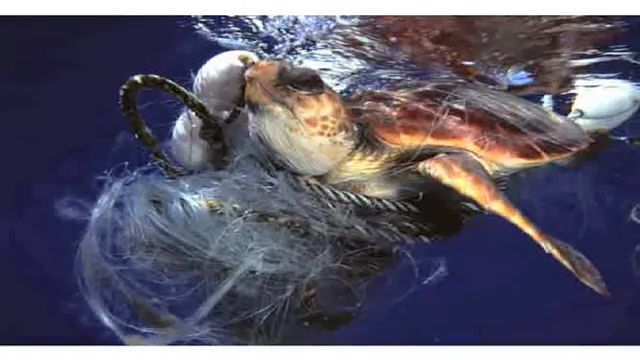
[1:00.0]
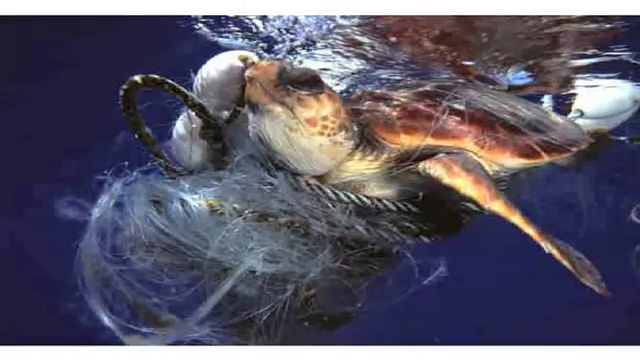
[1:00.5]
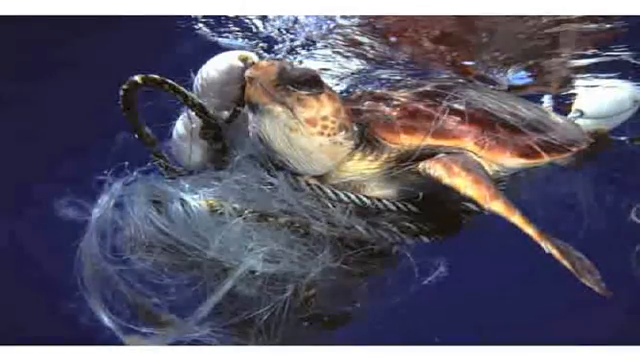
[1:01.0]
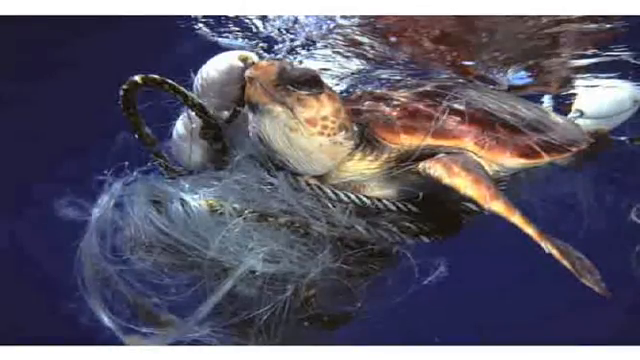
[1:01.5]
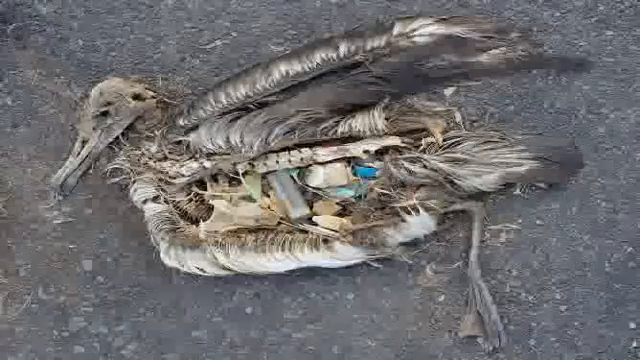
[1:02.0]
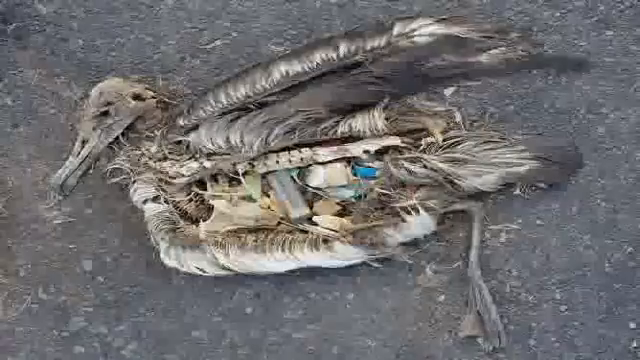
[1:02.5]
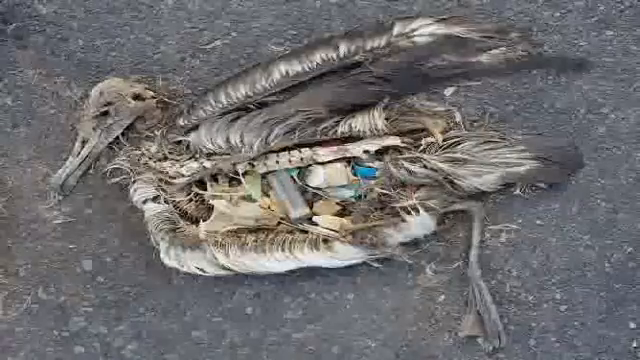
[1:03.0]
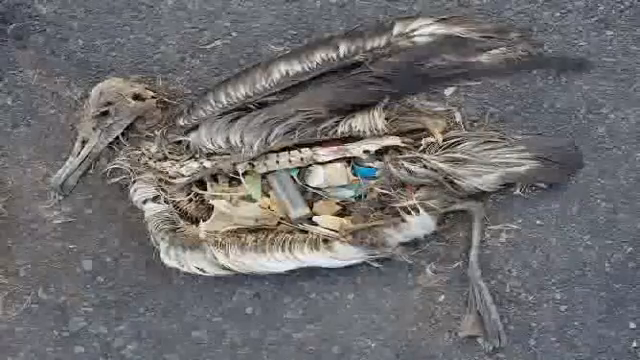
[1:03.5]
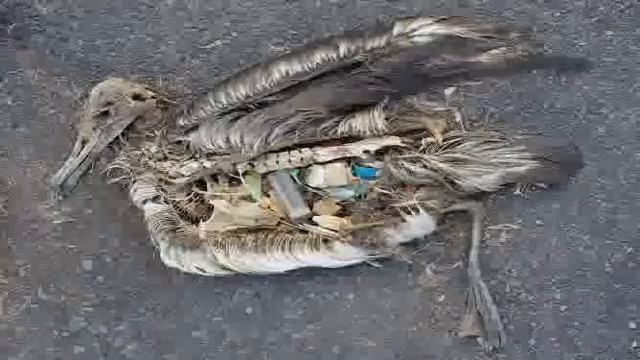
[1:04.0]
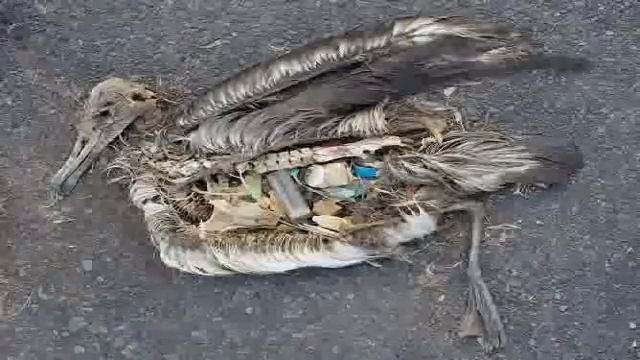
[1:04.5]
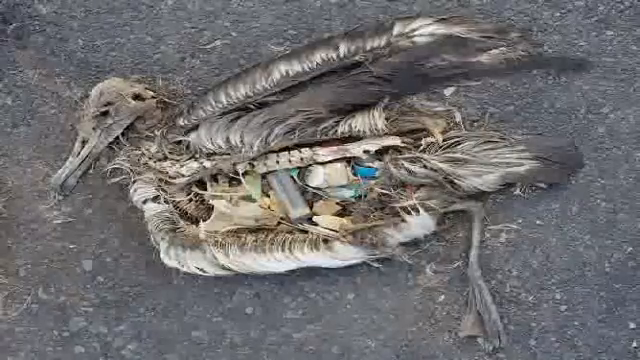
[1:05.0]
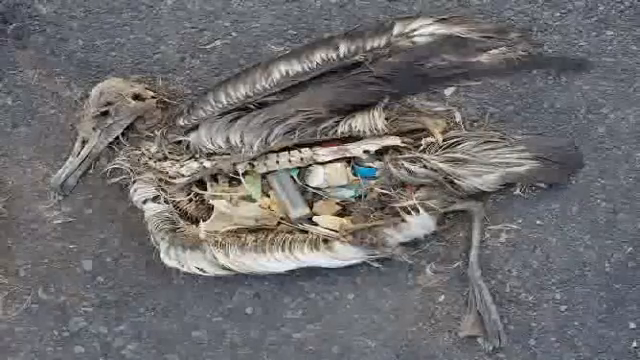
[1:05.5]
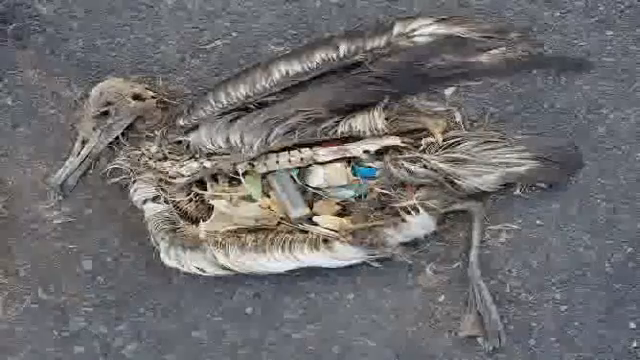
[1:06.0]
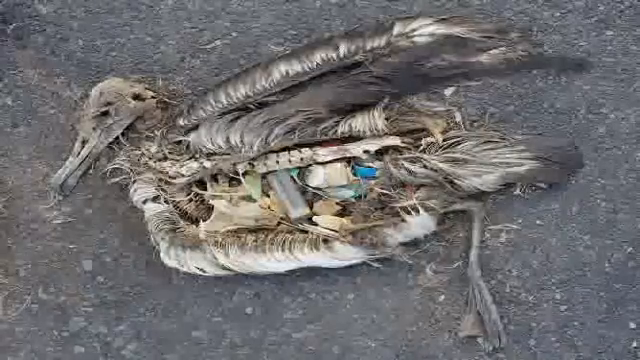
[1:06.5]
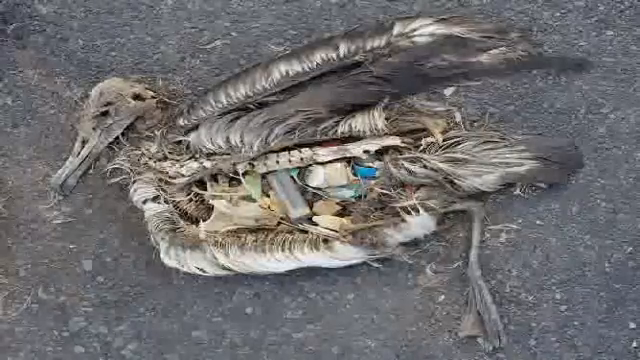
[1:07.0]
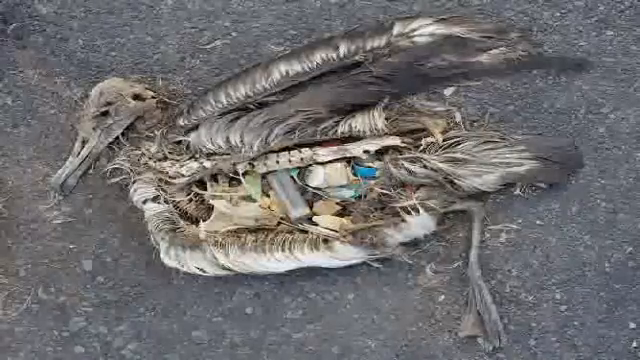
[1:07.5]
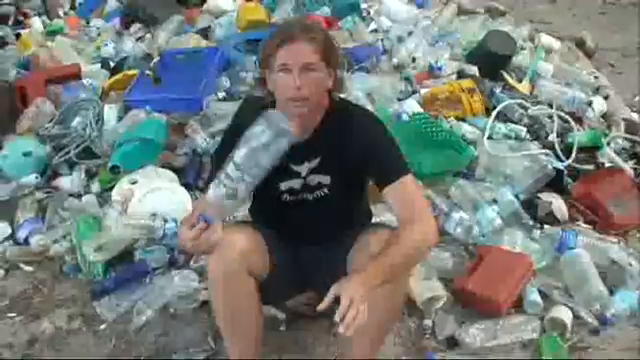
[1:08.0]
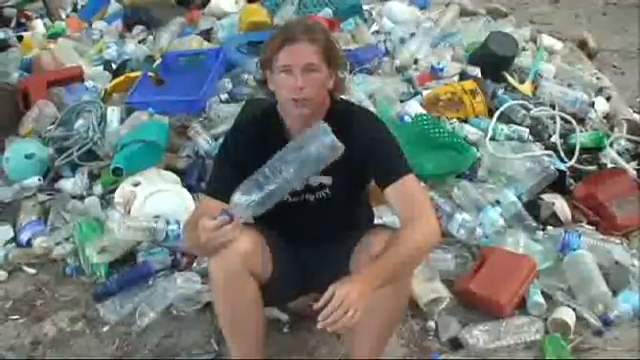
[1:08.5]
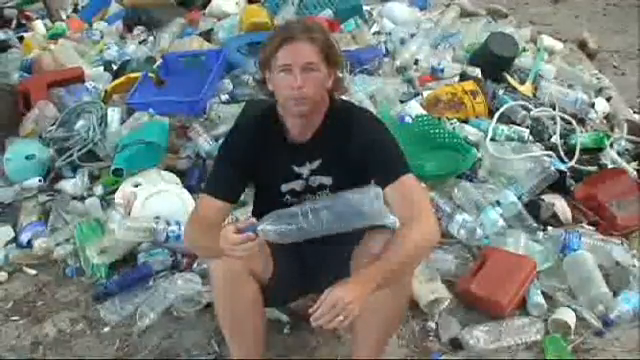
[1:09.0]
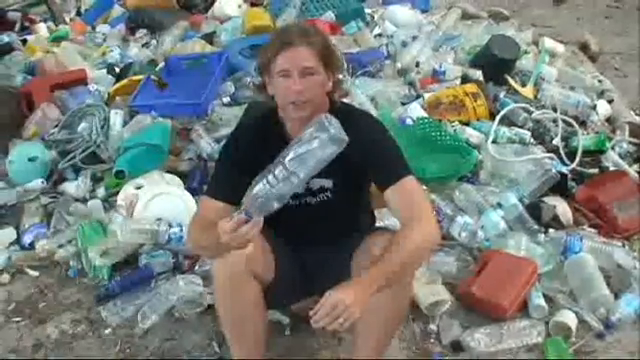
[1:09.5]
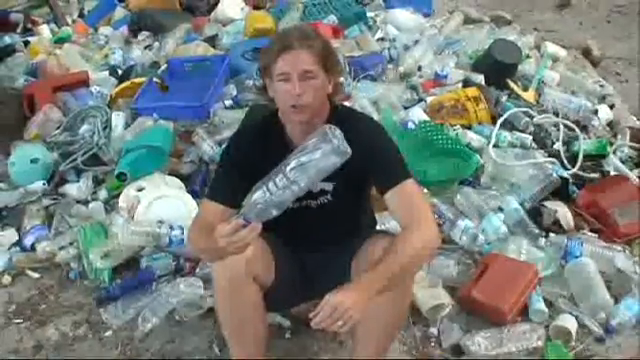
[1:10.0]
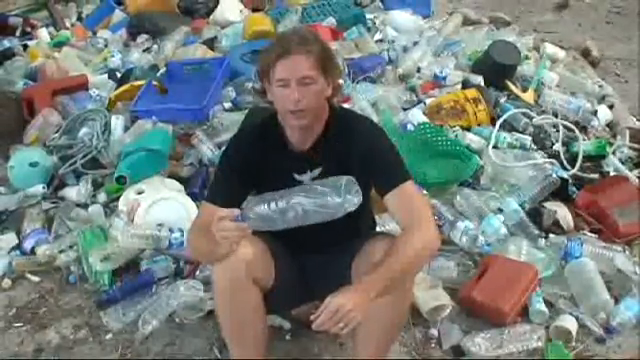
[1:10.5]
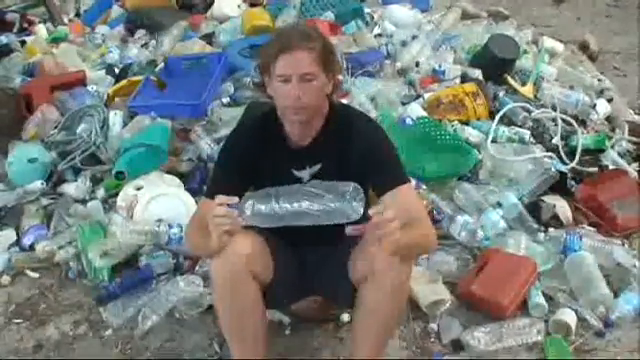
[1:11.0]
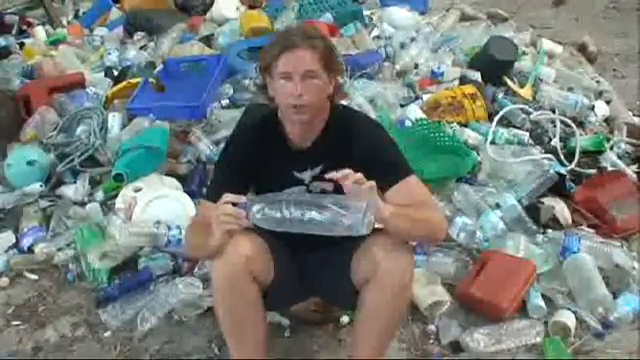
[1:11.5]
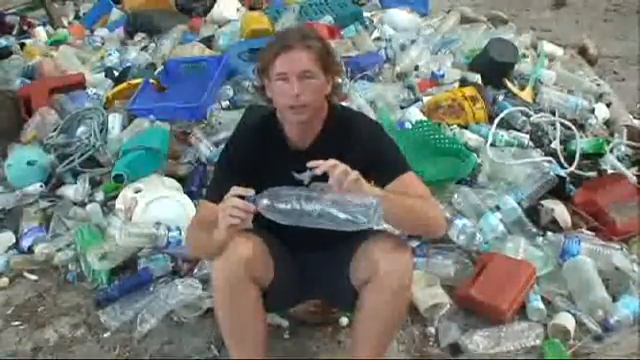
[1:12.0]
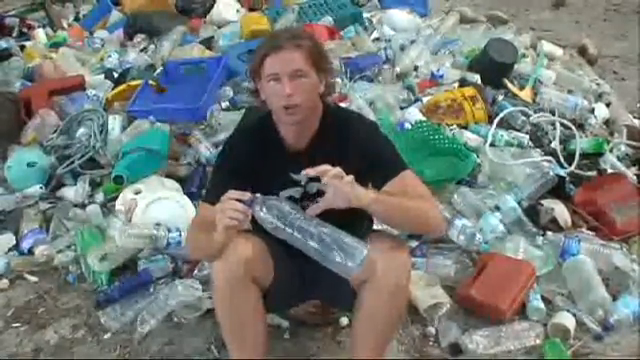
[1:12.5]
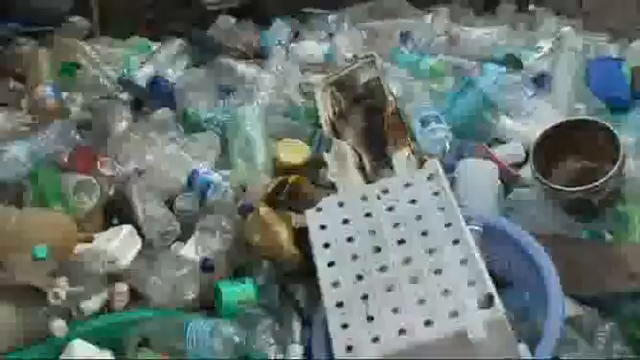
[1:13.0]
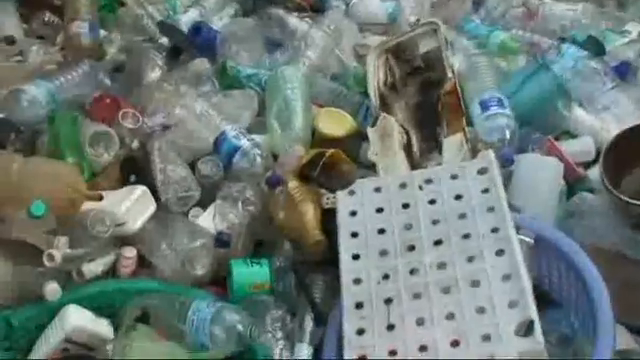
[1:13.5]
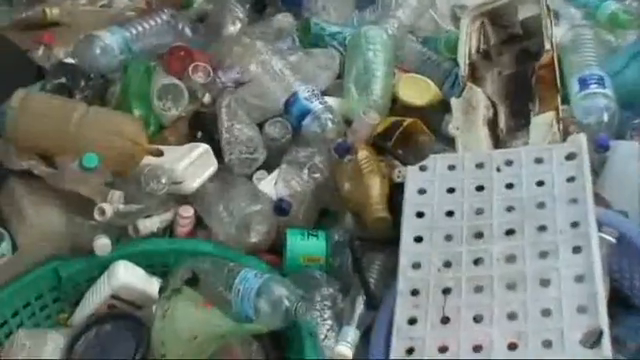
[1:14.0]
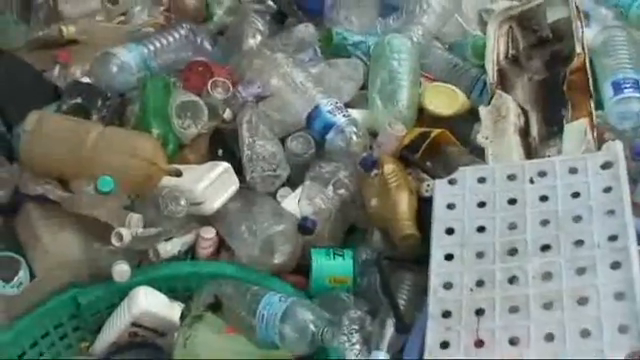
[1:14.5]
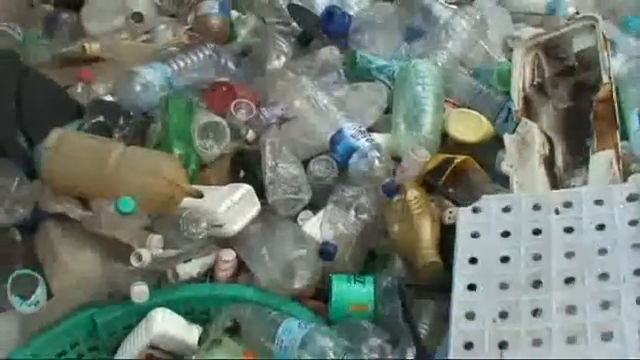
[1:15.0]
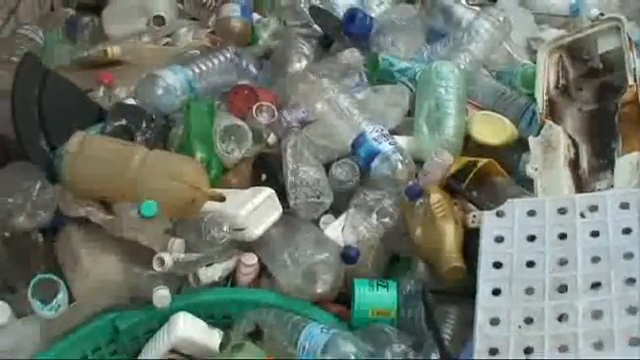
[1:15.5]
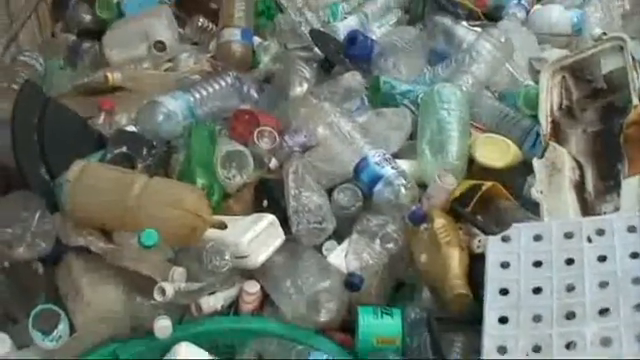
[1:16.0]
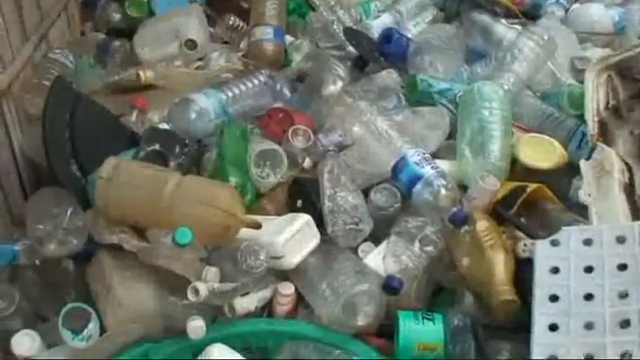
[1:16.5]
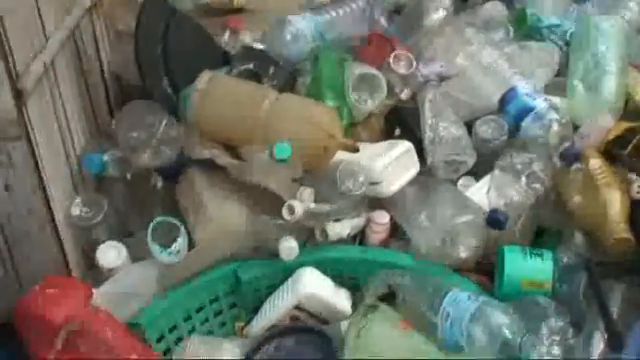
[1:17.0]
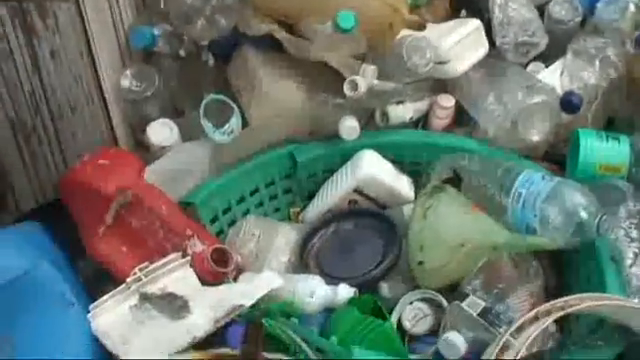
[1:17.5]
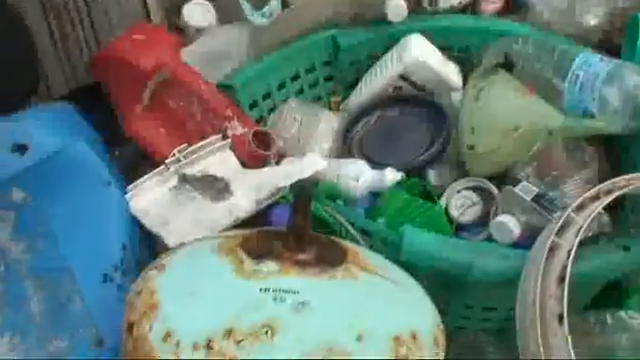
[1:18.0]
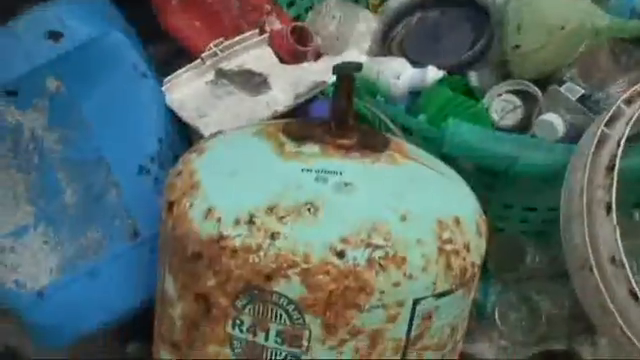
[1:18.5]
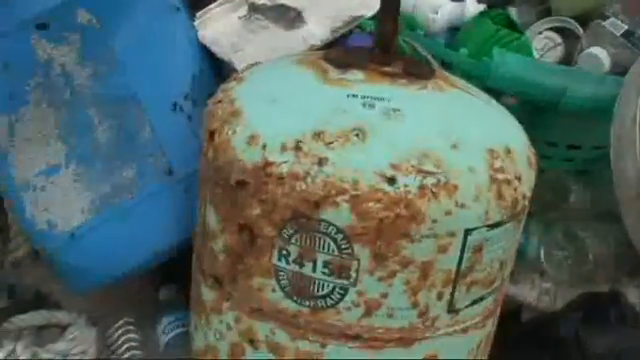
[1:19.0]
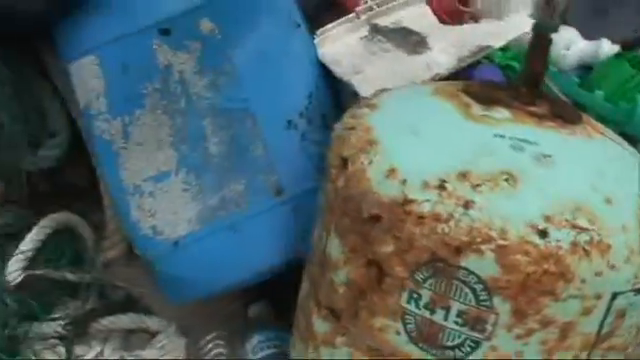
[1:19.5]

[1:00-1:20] A turtle swims just below the water surface, with a lot of garbage entangling its body; it looks like plastic material, and there is also what looks like a black and white string around its body. Next, a dead bird lies on the ground, decomposing, with a lot of trash in its abdomen; plastic material is visible, left behind after the bird decomposed. The man is then seen sitting close to a pile of garbage, holding a bottle and speaking to the camera. The camera zooms in on the garbage, which is mostly bottles along with various plastic containers, and among the trash is something that looks like a gas tank.